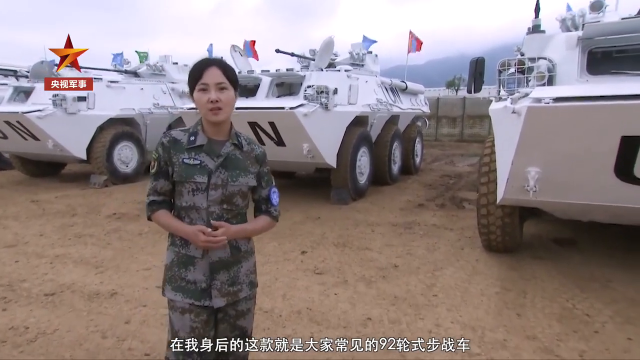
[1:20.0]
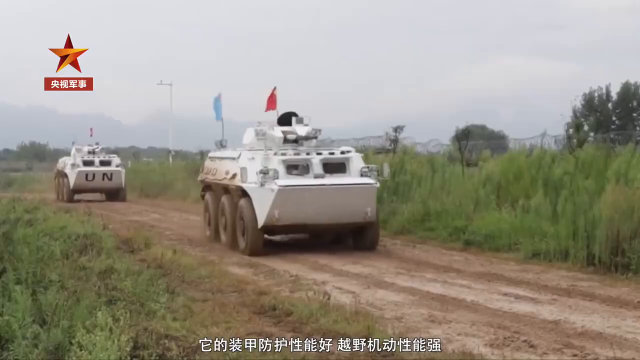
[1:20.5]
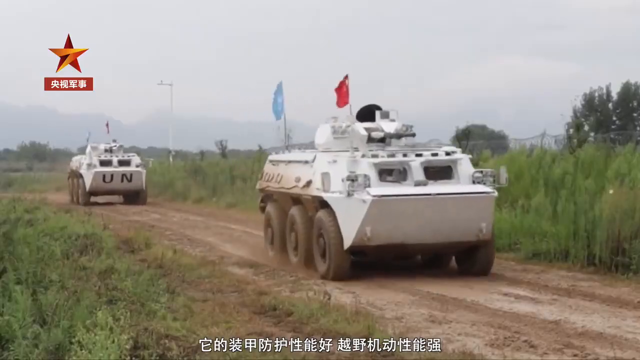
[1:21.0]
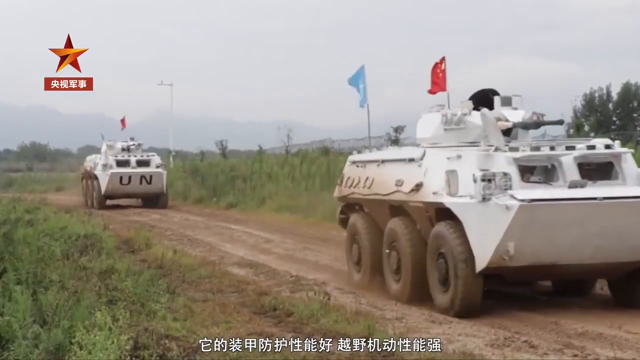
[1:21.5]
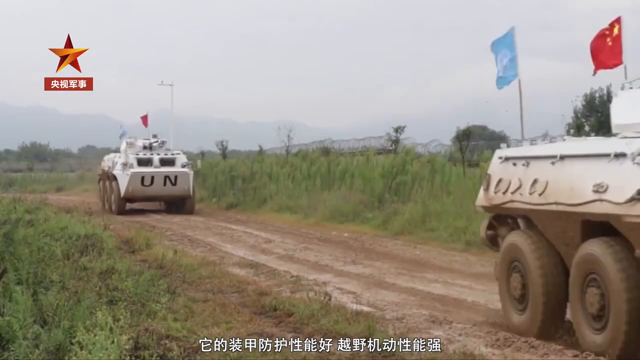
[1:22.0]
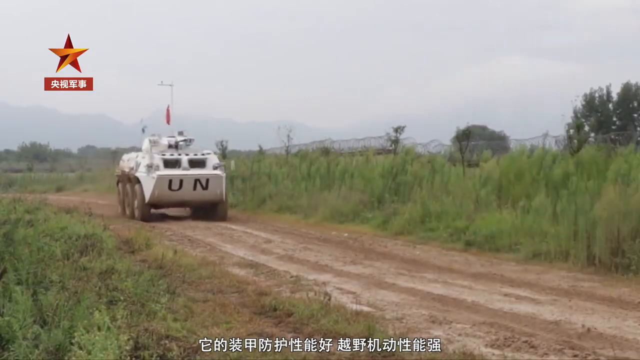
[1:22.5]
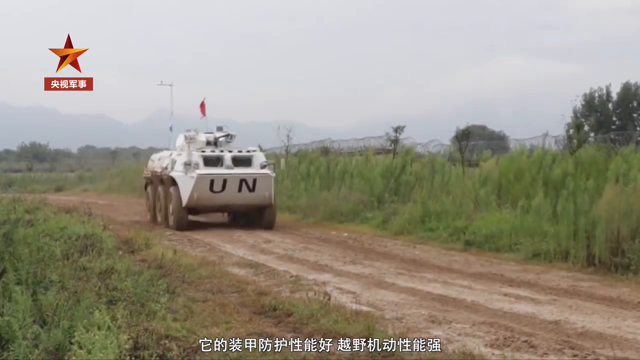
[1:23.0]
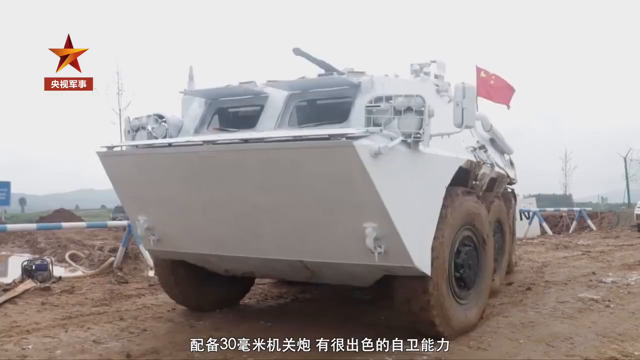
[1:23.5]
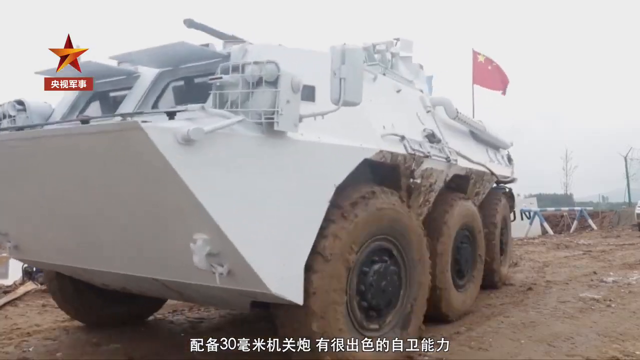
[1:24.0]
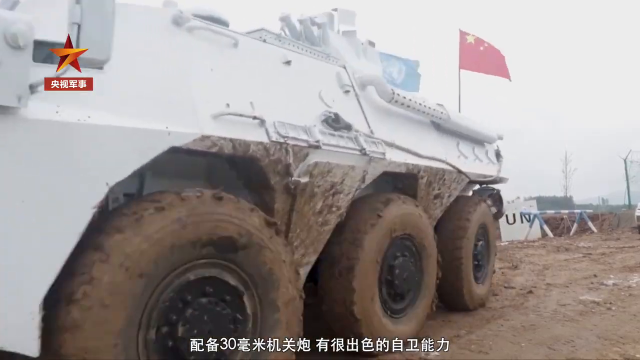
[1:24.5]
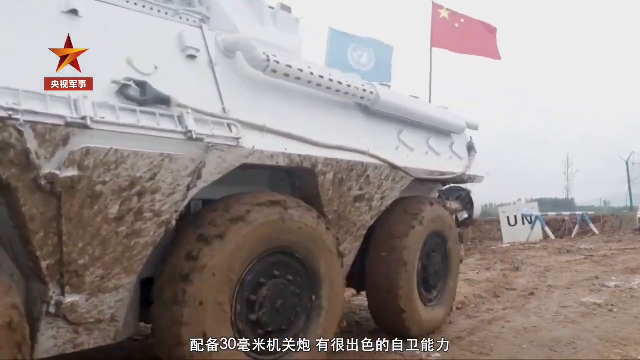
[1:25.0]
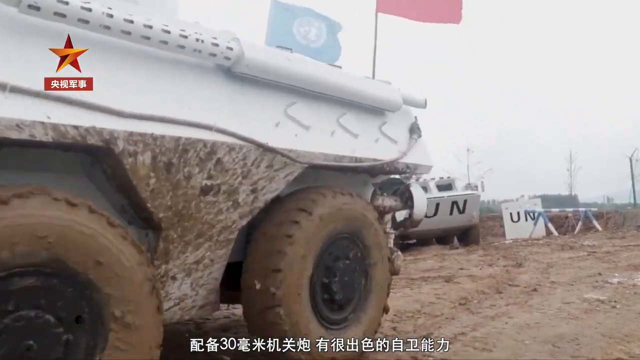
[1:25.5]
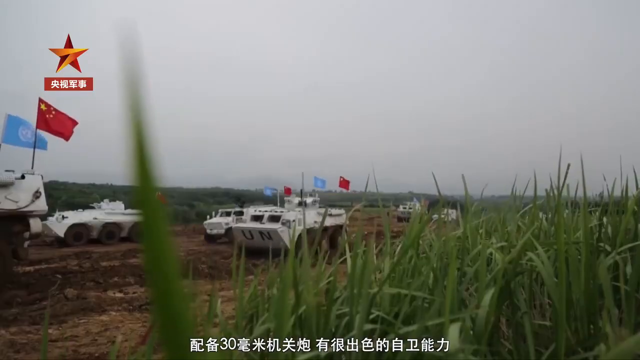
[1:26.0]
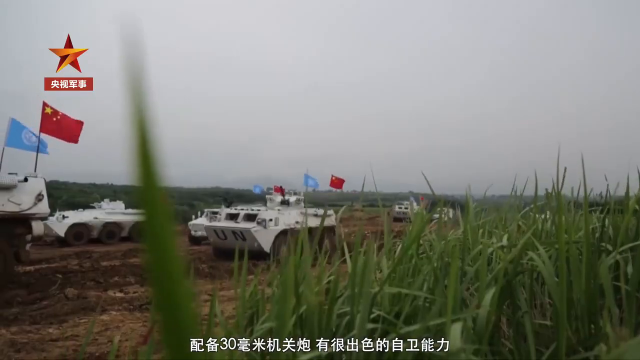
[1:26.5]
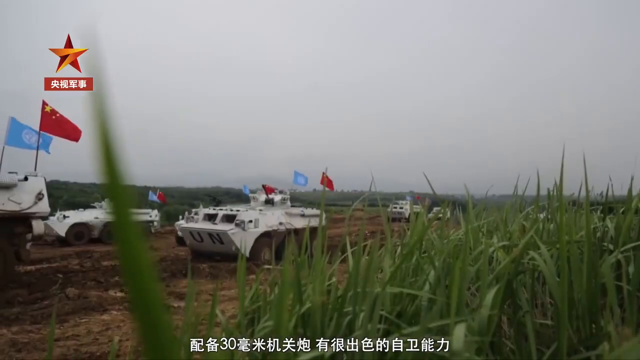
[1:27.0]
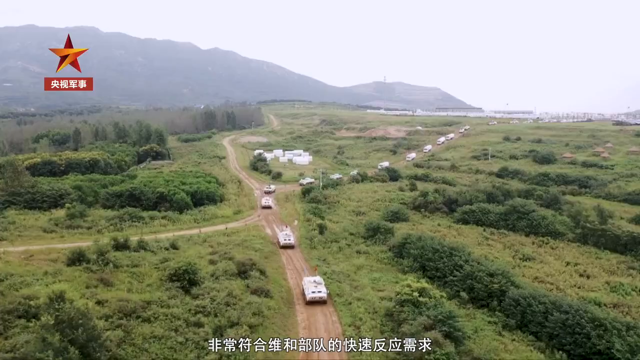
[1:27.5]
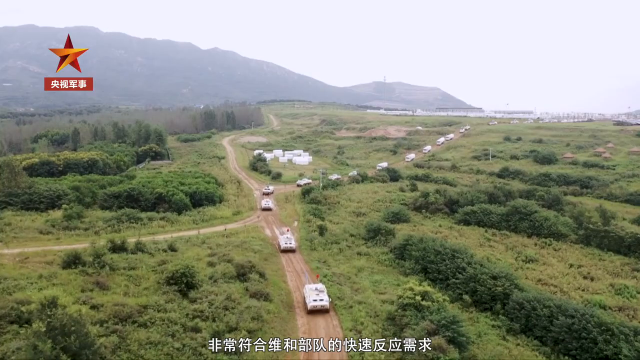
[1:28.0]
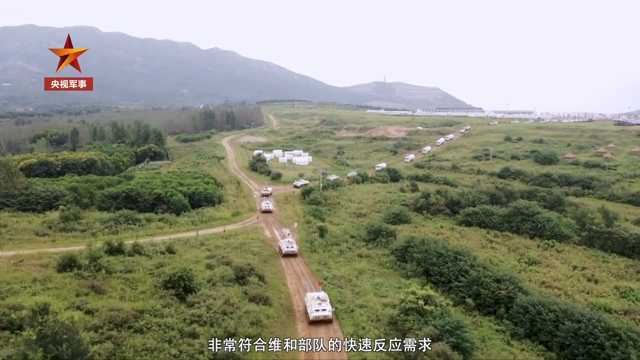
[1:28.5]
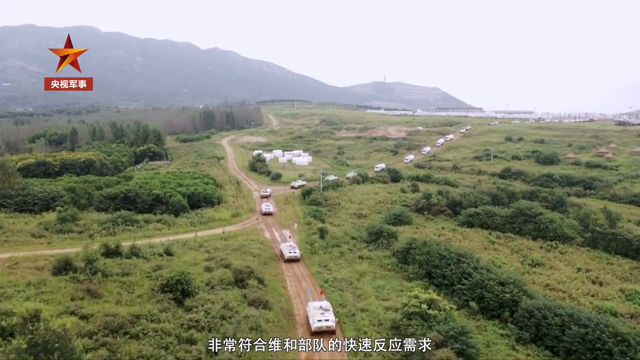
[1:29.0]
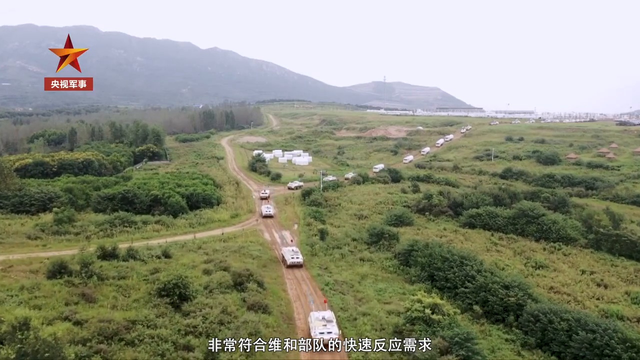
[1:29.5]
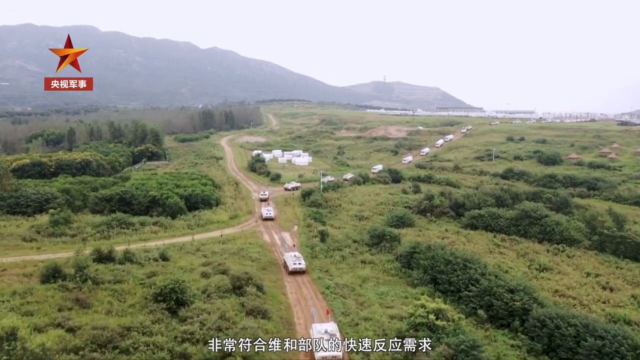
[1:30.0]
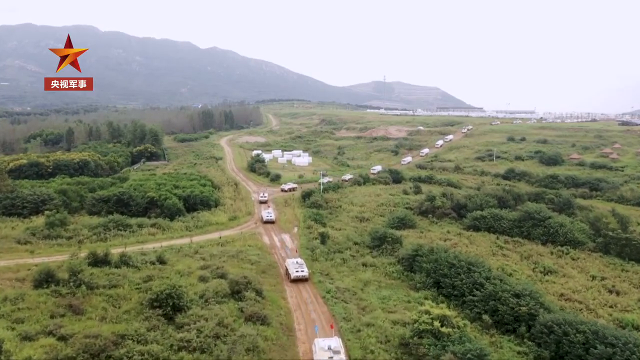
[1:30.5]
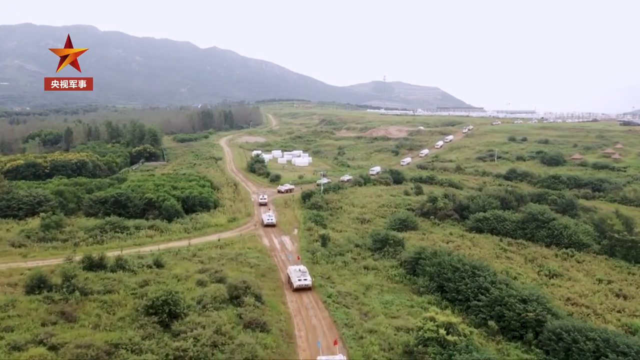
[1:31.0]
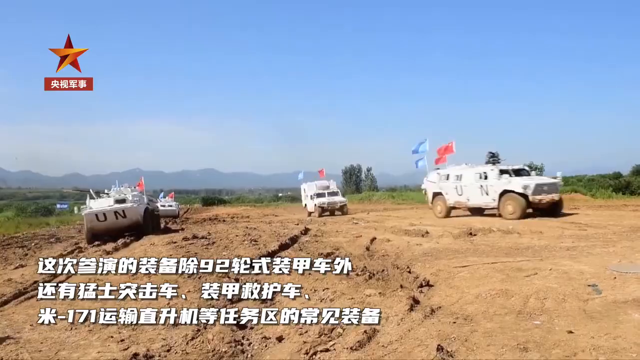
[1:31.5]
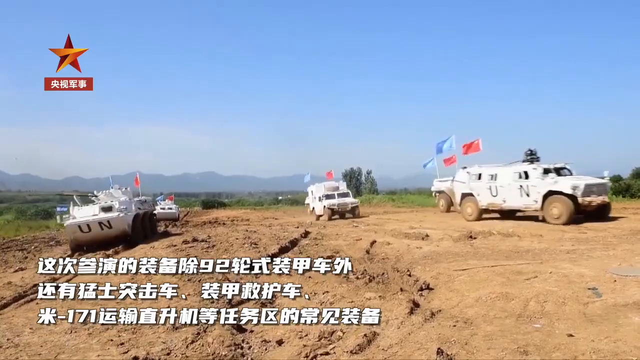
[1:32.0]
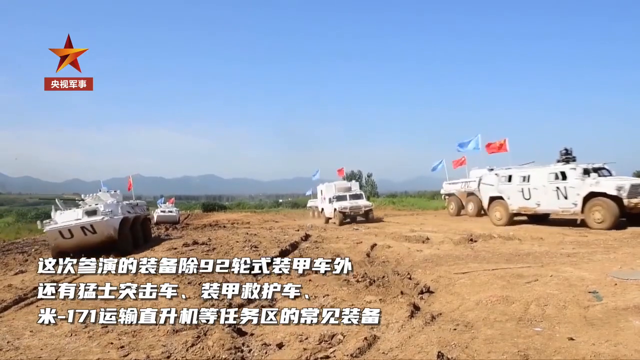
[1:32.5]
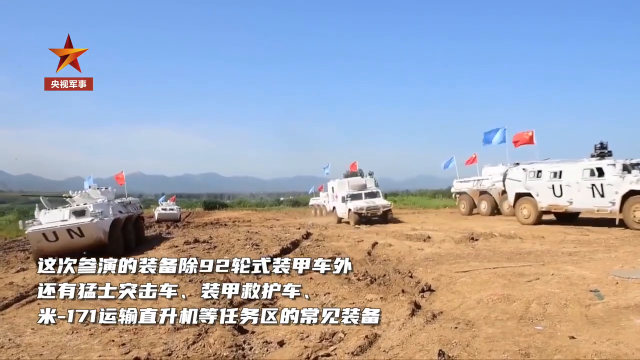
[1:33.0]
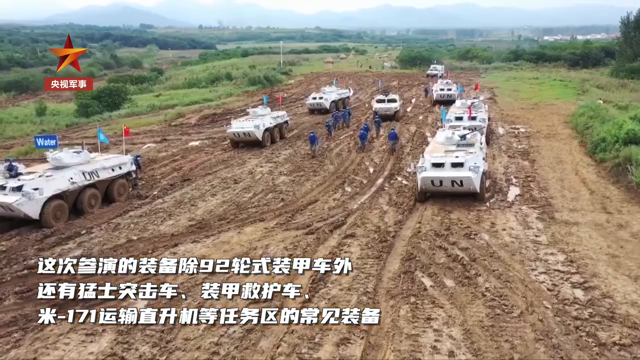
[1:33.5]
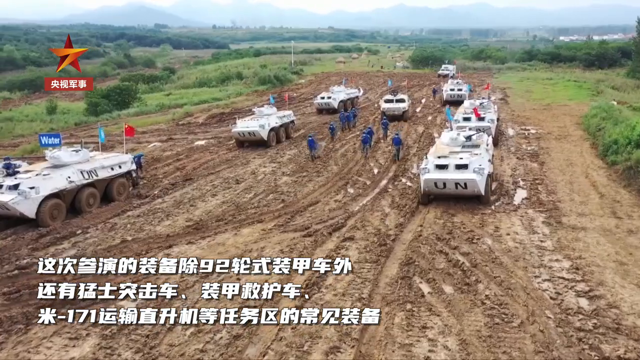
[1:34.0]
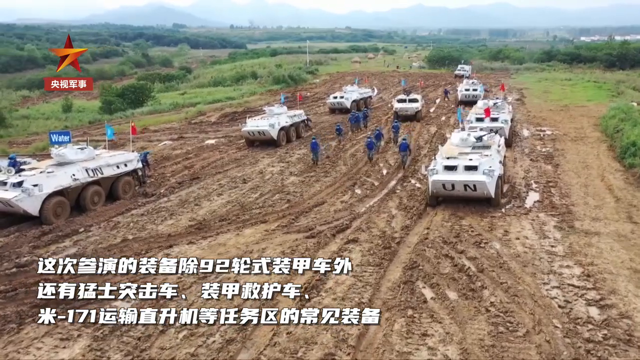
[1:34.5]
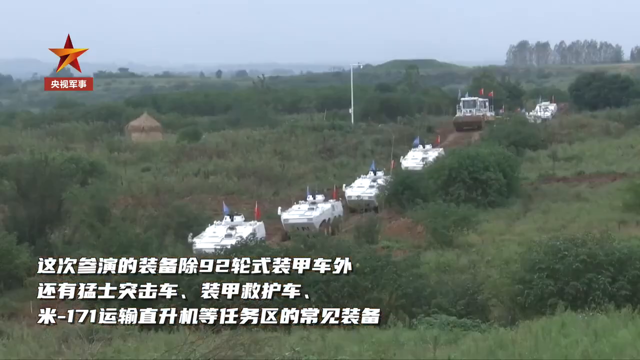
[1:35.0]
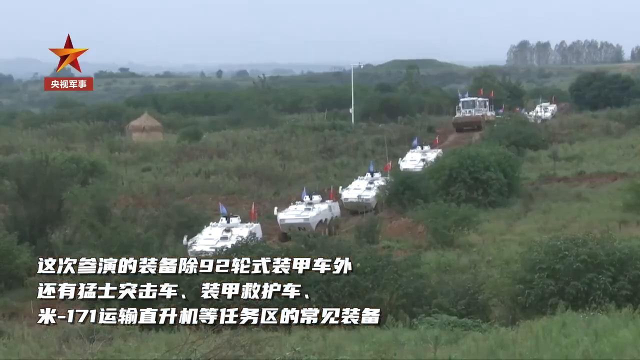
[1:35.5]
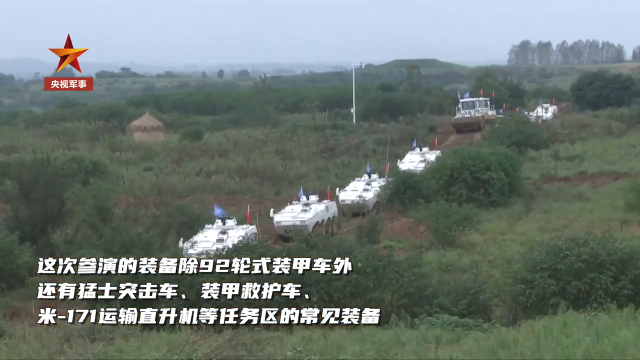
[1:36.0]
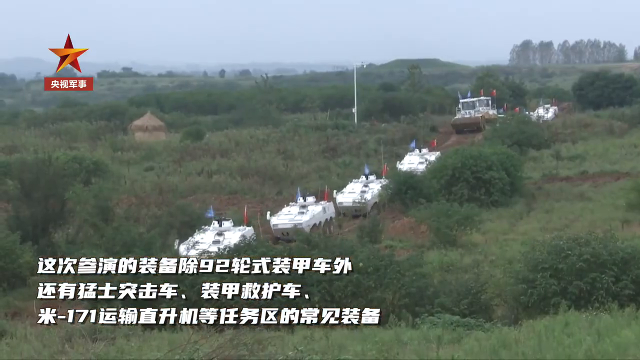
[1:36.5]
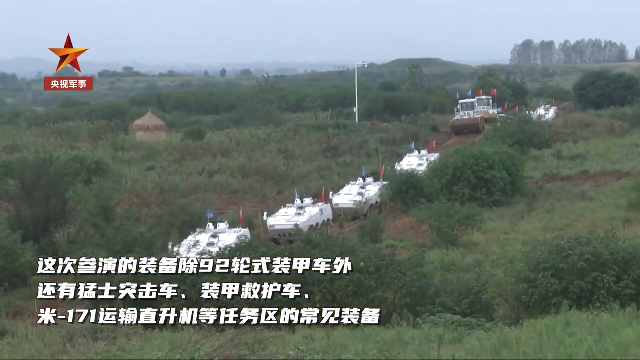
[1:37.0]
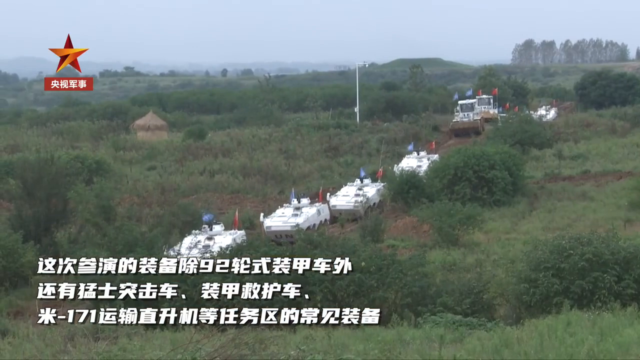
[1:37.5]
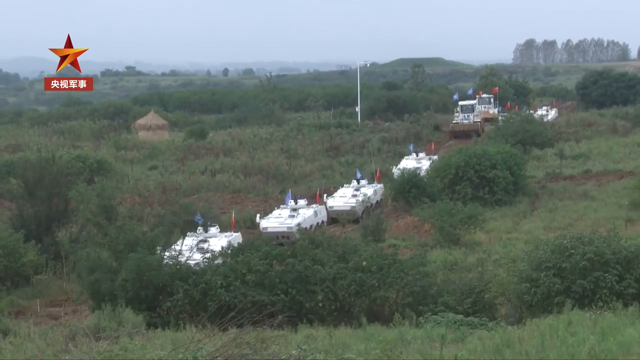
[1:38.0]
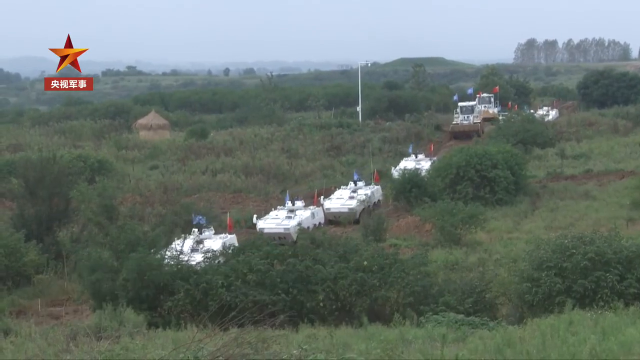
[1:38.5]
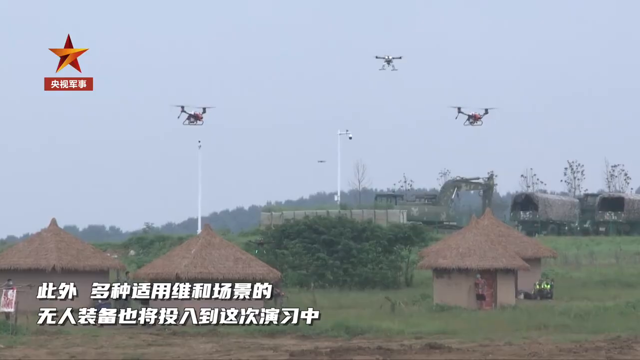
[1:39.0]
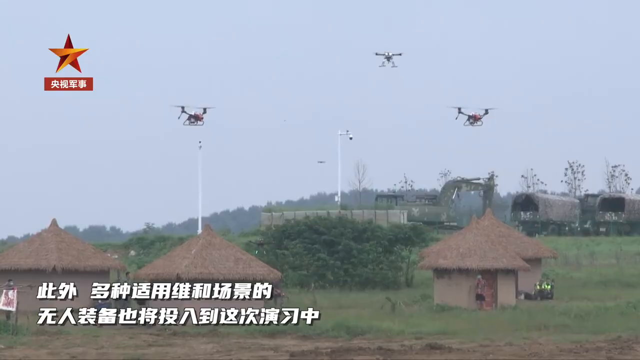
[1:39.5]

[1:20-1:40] A wide dirt track has green shrubbery covering either side, and the high fencing of the facility is just visible beyond on the right-hand side. A military vehicle, some form of tank with big UN letters painted on the front, drives along the track. An aerial view shows a whole line of these pristine white UN military vehicles flying flags, with two flags on the back of each vehicle, a blue one and a red one. Three drones are up in the air over the military procession, and a number of military personnel in blue outfits run along in the middle of it. The vehicles have three rows of giant tires on each side, and their nose looks like a shovel and points upwards.